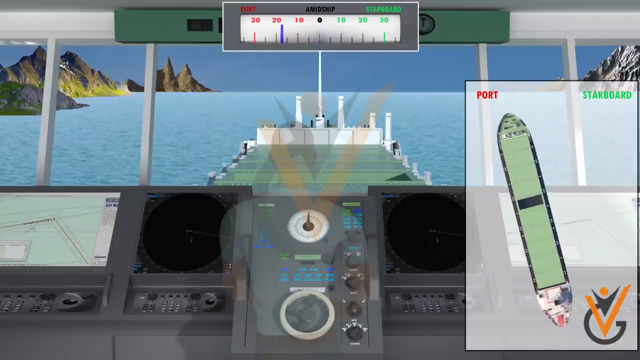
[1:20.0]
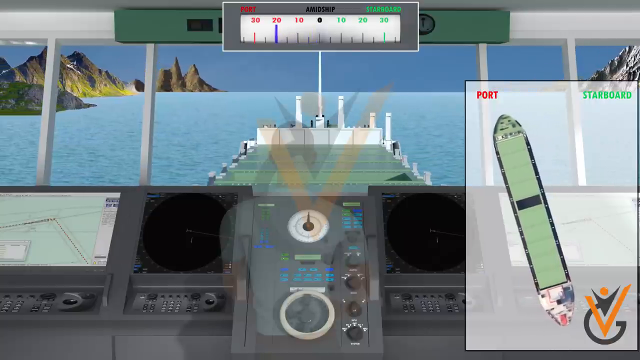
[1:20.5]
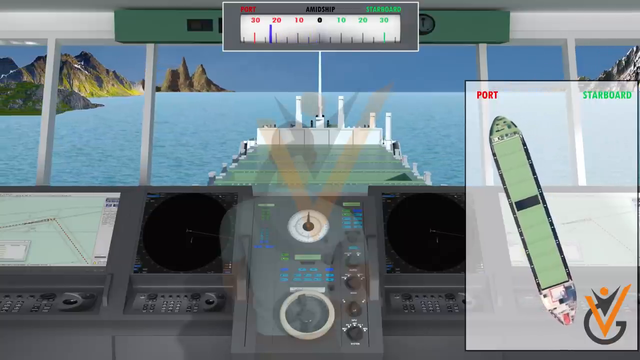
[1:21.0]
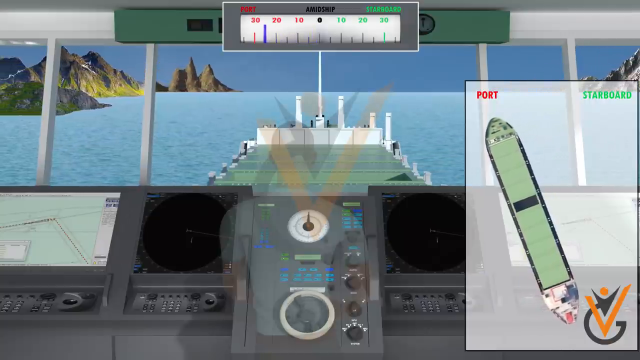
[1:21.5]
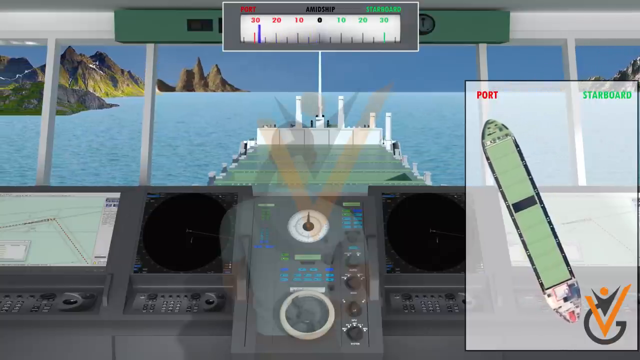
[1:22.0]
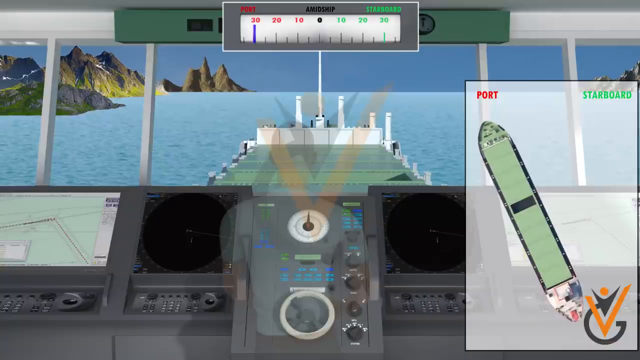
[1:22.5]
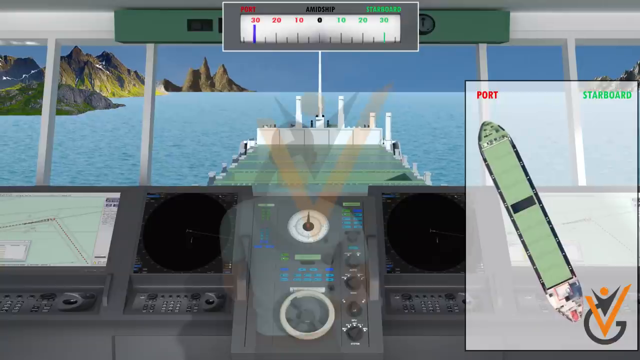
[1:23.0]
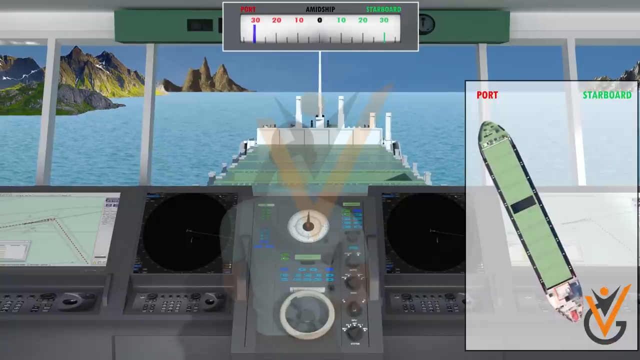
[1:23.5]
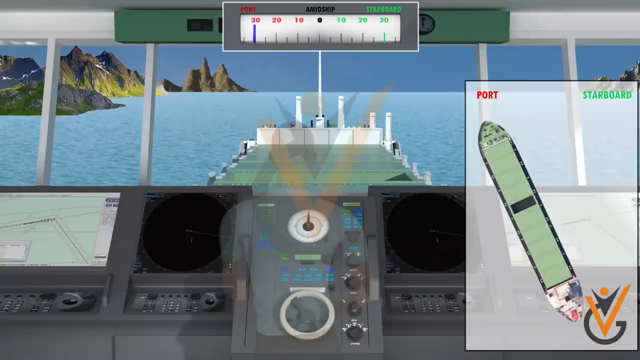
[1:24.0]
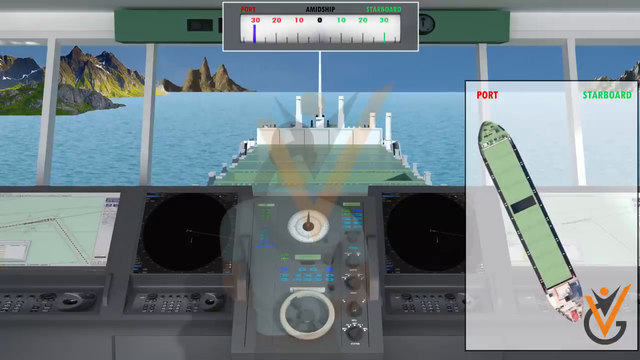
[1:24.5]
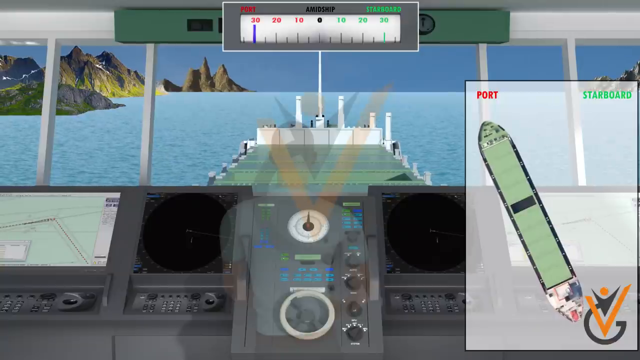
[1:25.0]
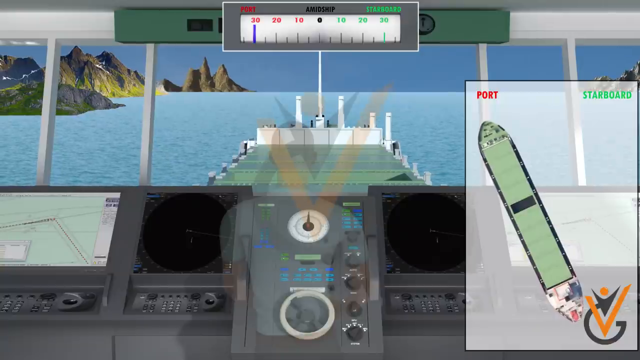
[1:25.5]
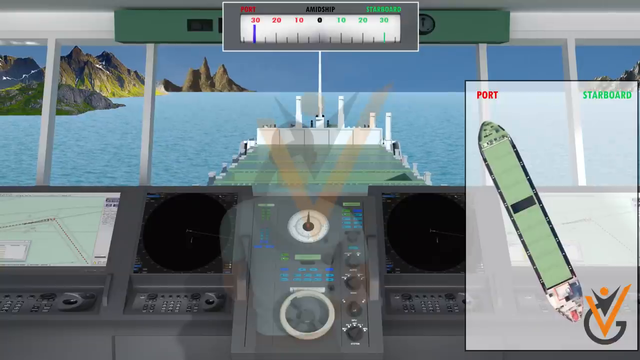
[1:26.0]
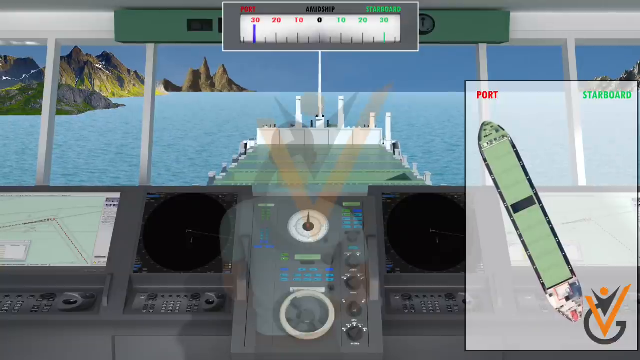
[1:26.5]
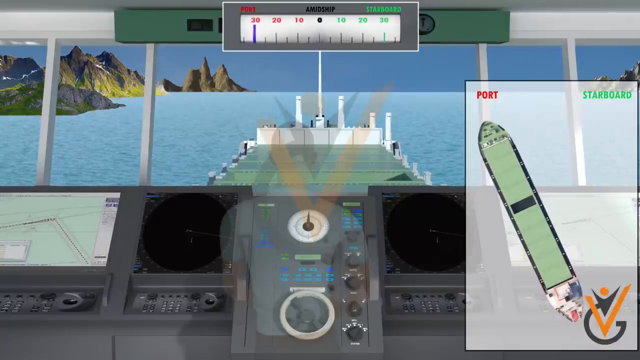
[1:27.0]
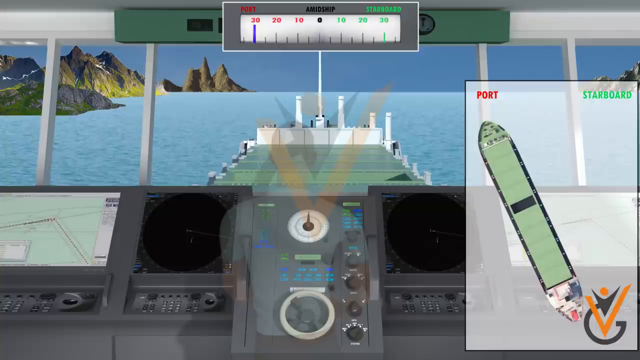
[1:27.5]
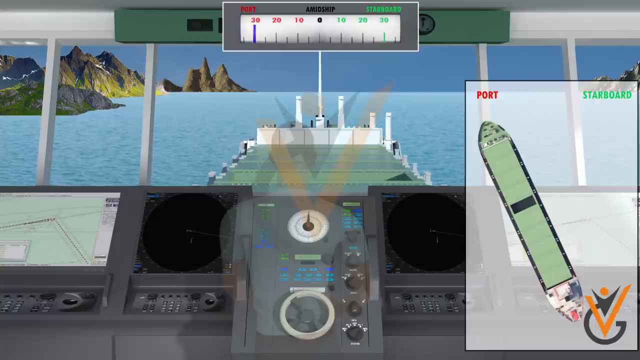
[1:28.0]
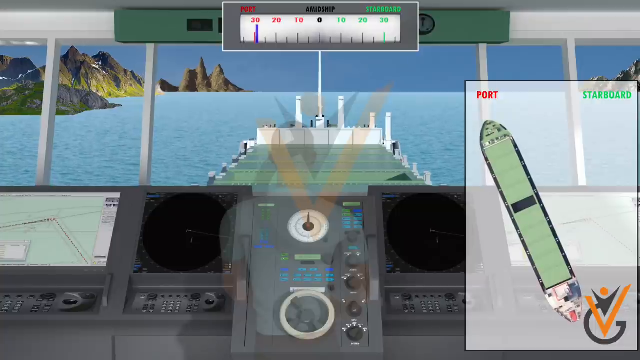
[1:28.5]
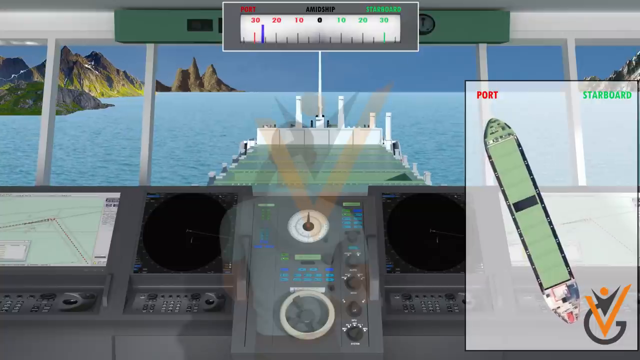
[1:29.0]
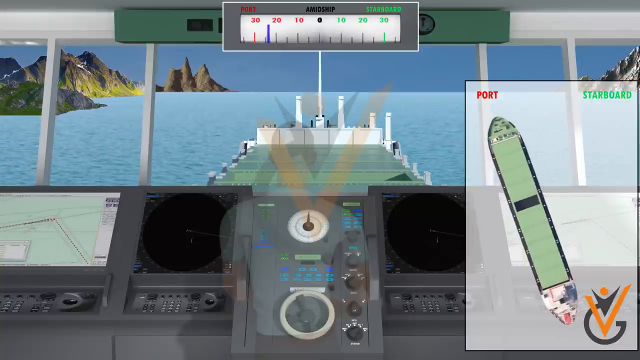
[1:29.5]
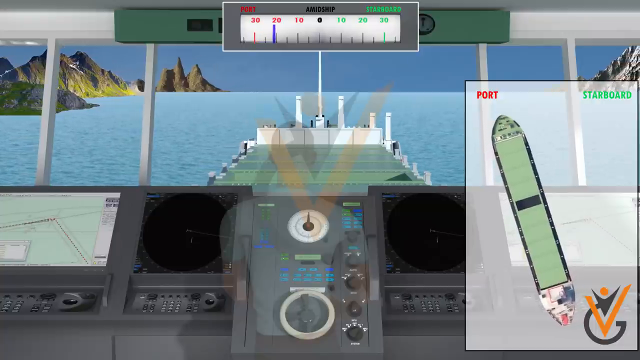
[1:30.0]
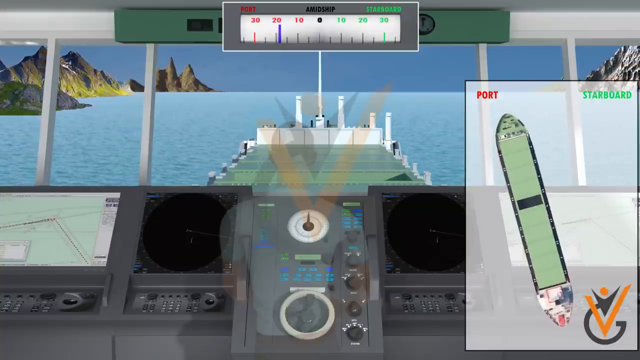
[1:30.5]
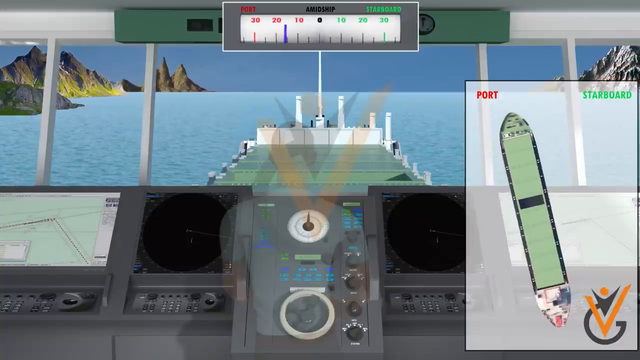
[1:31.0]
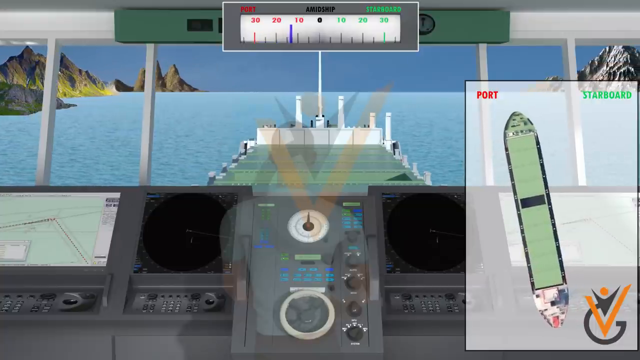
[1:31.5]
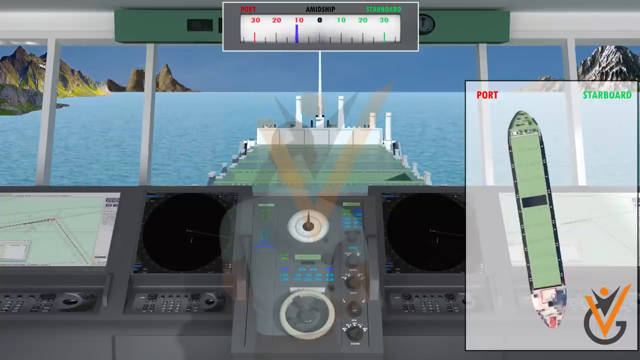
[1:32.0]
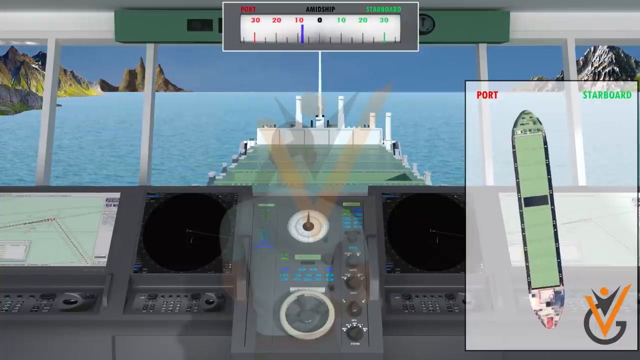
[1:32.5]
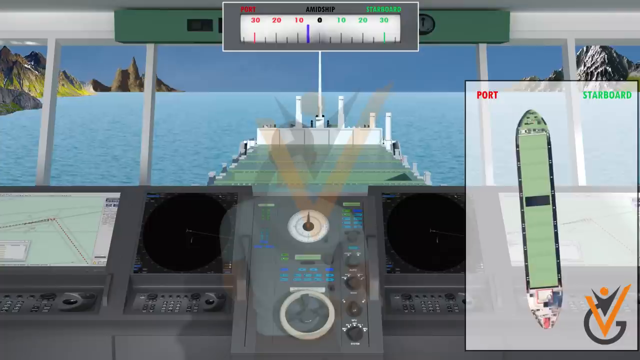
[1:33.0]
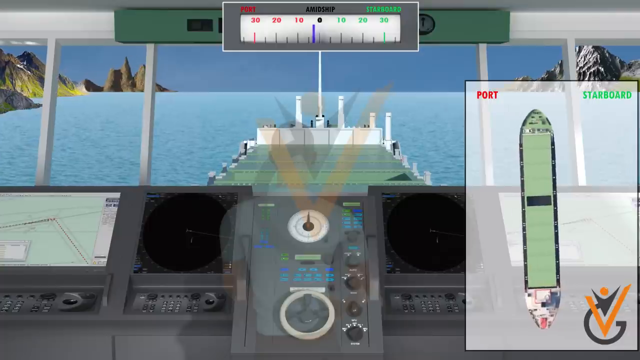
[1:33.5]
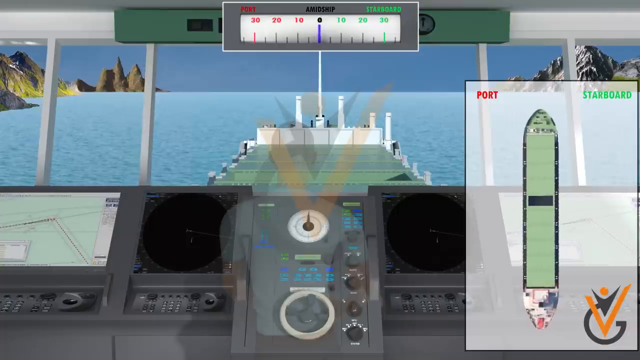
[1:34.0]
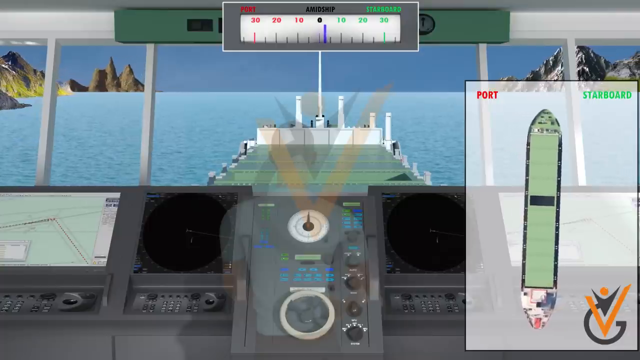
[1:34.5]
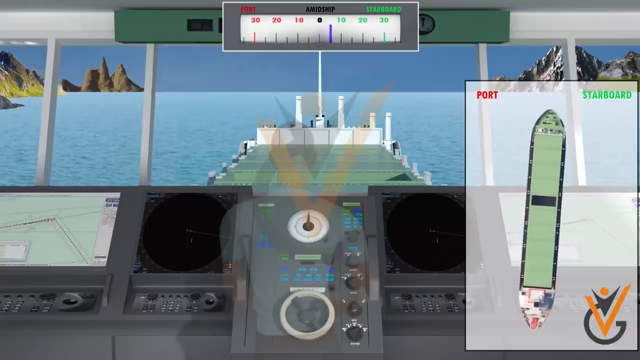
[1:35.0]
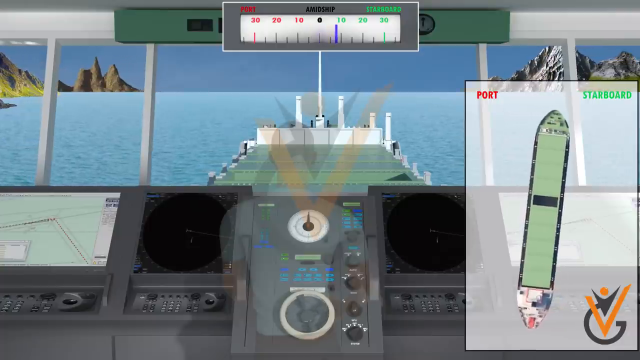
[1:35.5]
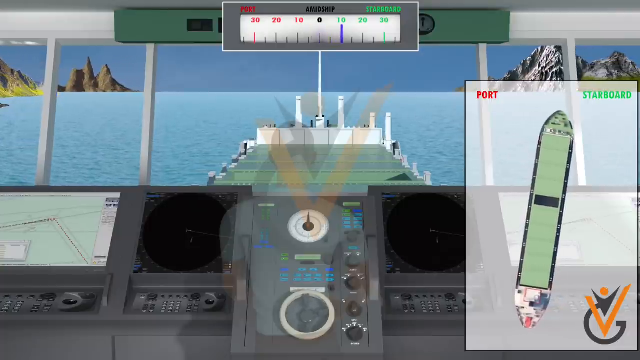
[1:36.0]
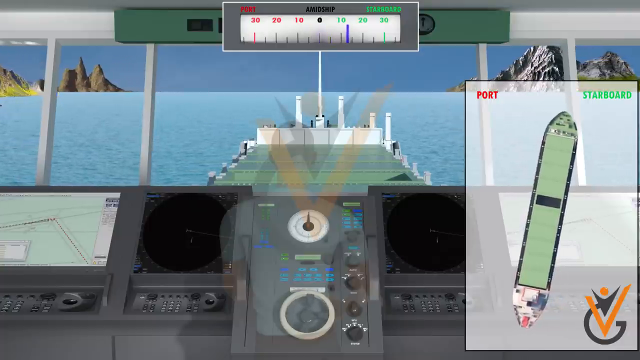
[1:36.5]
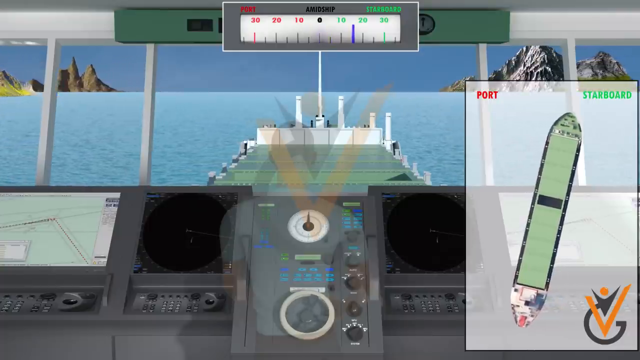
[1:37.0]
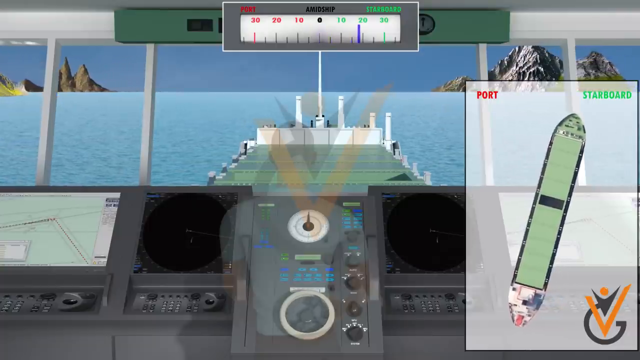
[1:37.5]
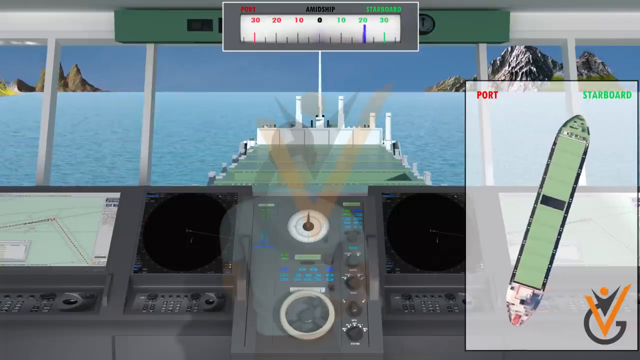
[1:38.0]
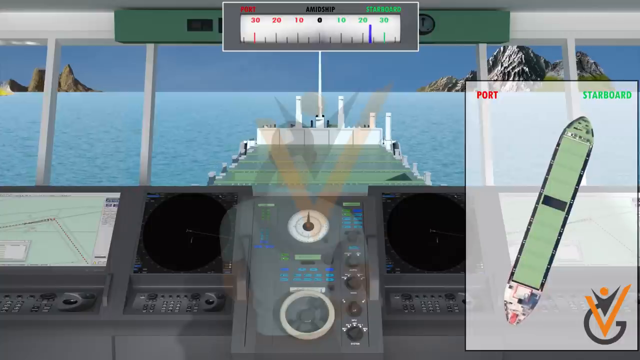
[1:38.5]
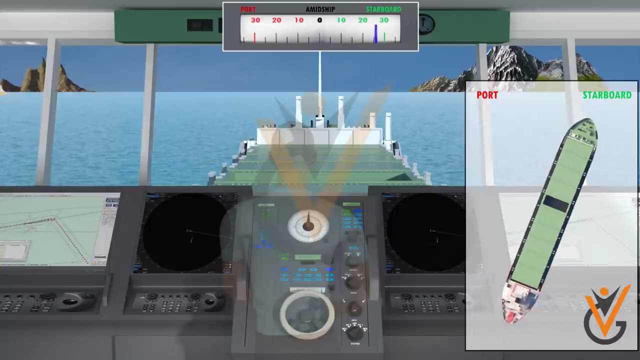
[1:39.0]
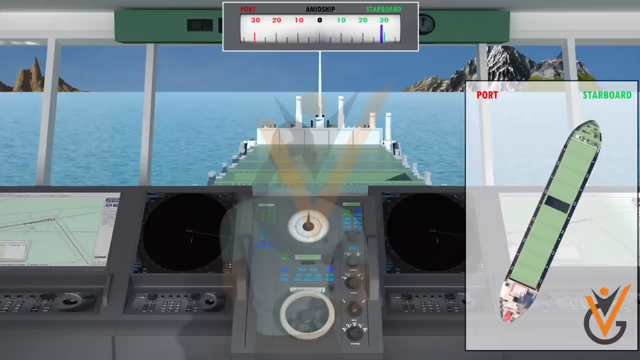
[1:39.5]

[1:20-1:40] The boat is pointed to the extreme left, or port side, of the simulation and then moves to the extreme starboard side. When the boat is moved to port, the gauge at the top of the screen goes all the way to the red 30; when it is moved to starboard, the gauge goes all the way to the green 30, demonstrating the difference between the two directions. When the boat is steered to the left, three areas of mountain range are visible in the background, and when it is steered to the right, another area of mountain range is visible.